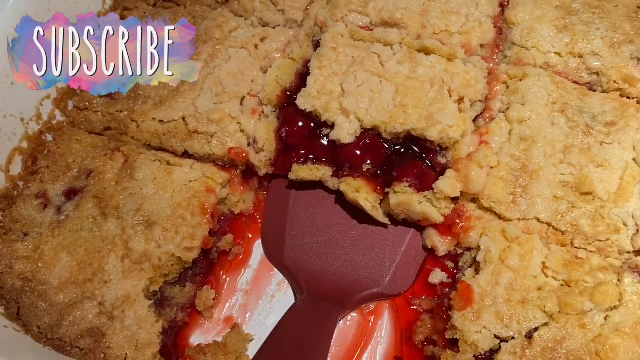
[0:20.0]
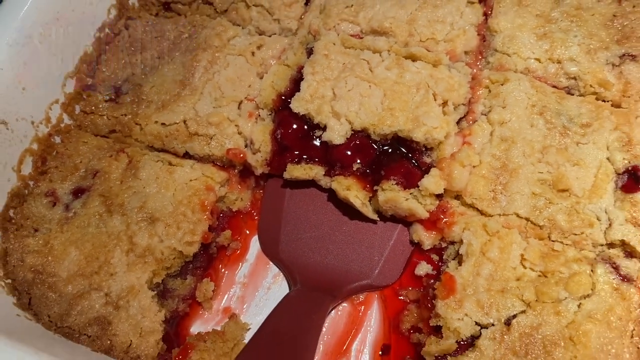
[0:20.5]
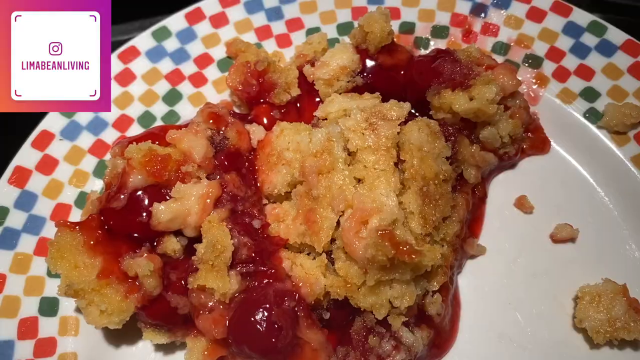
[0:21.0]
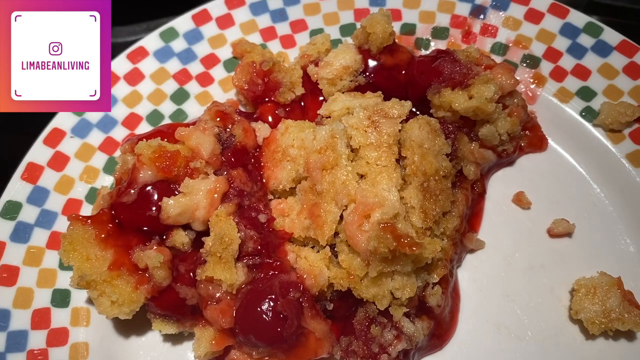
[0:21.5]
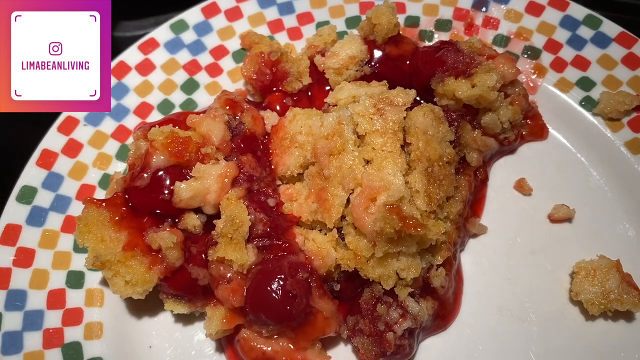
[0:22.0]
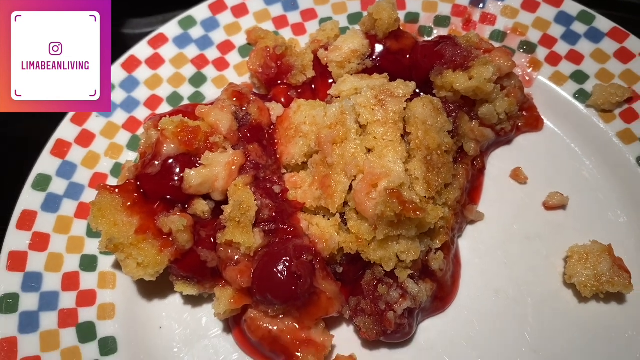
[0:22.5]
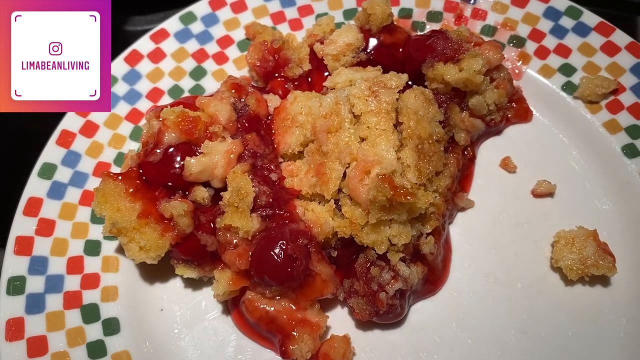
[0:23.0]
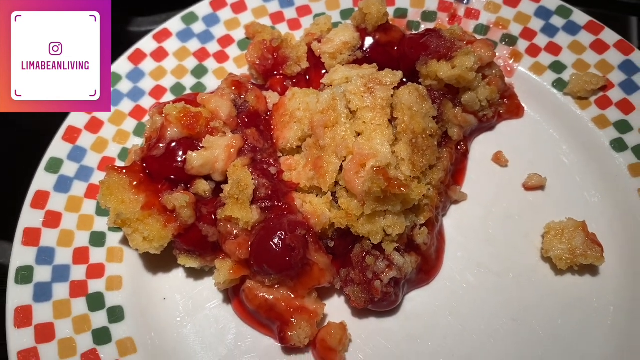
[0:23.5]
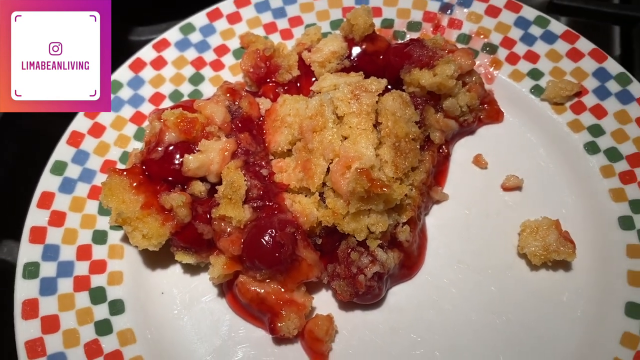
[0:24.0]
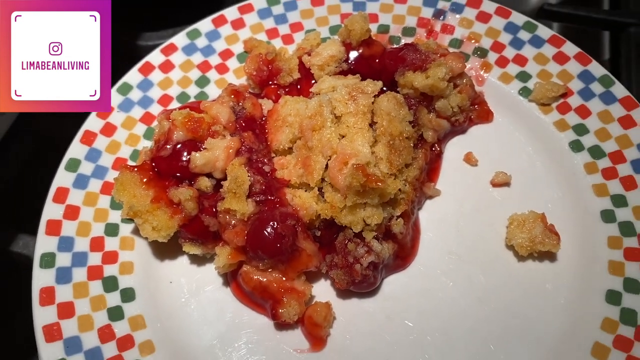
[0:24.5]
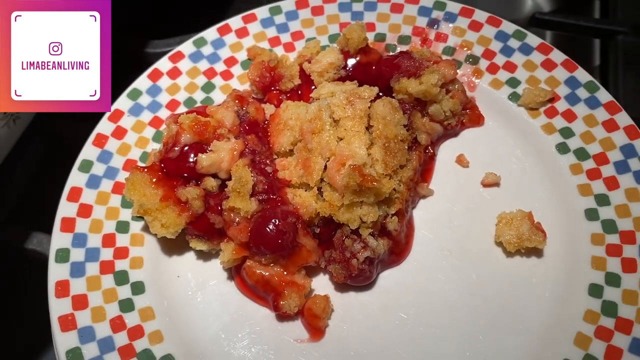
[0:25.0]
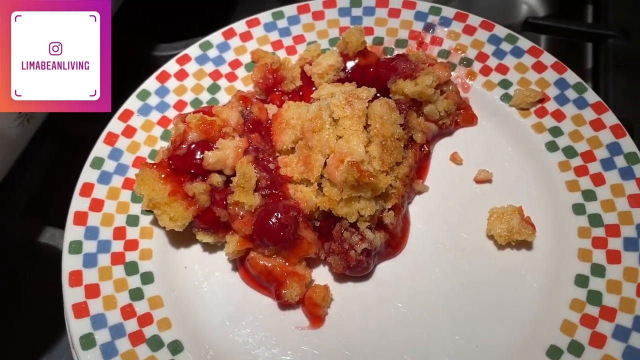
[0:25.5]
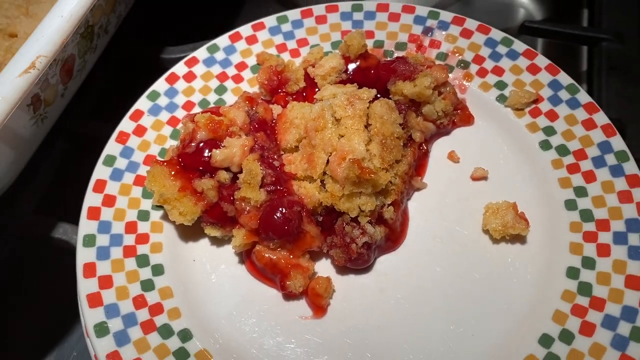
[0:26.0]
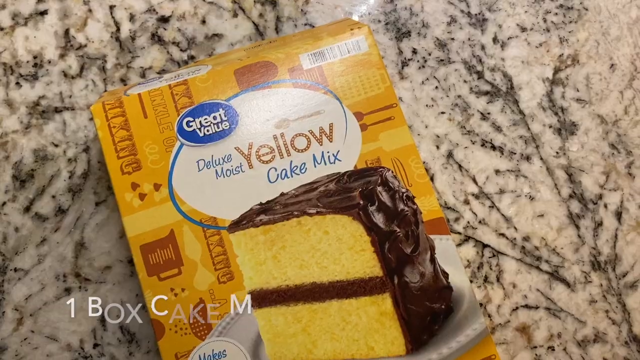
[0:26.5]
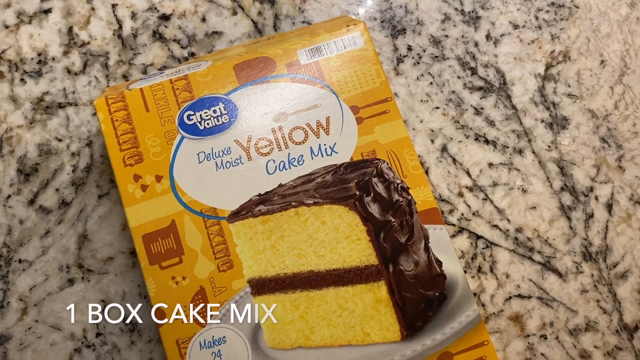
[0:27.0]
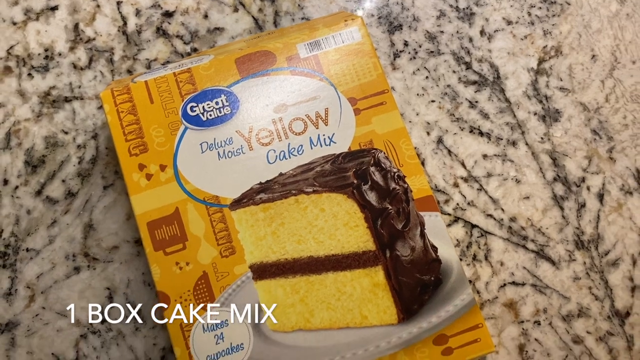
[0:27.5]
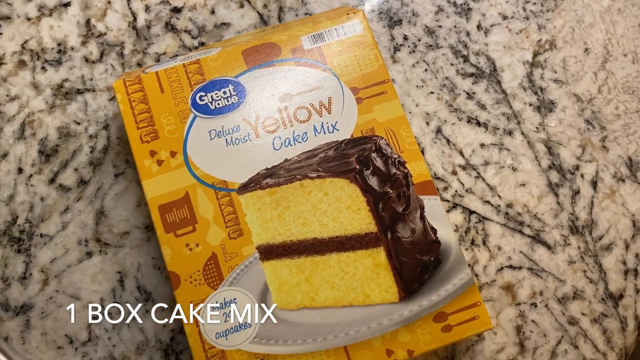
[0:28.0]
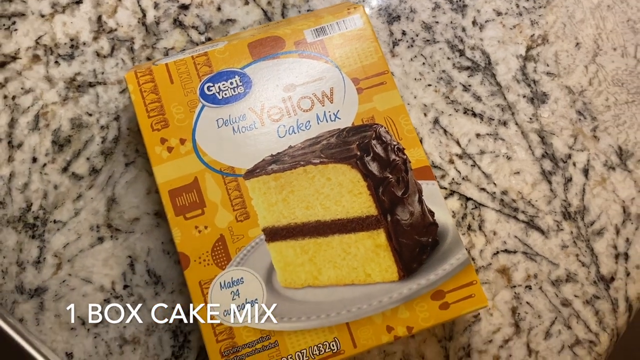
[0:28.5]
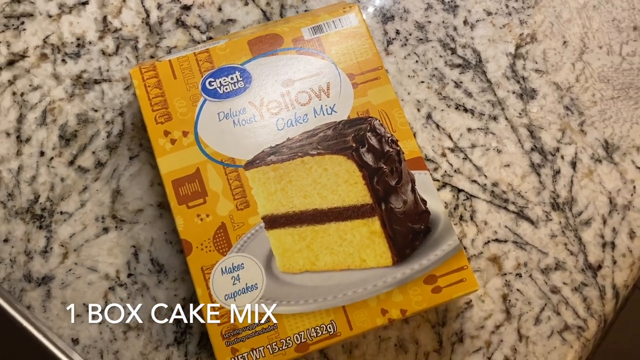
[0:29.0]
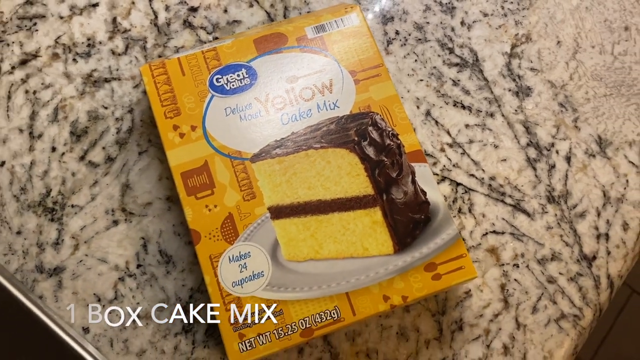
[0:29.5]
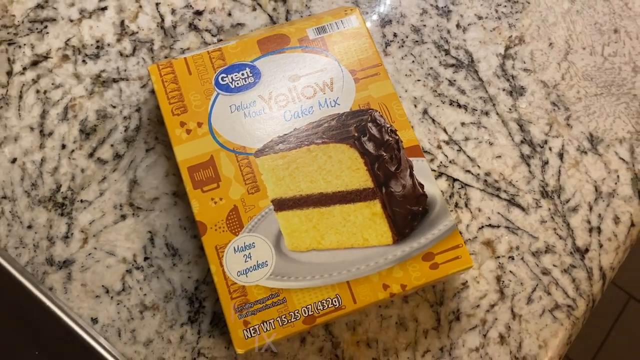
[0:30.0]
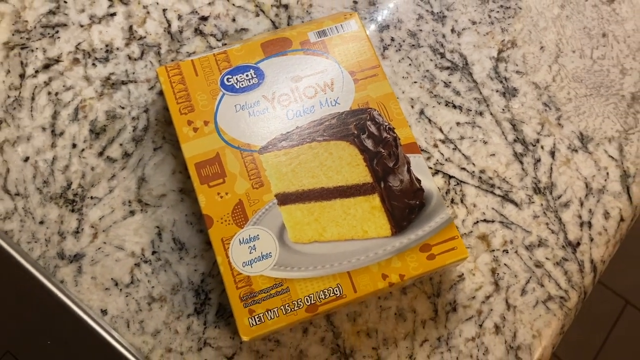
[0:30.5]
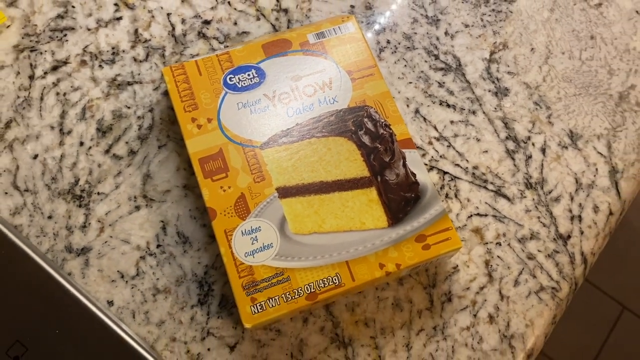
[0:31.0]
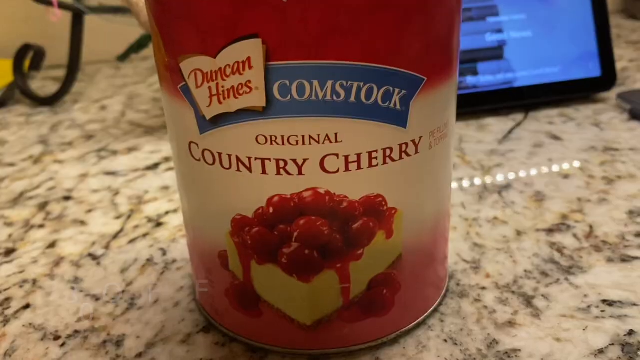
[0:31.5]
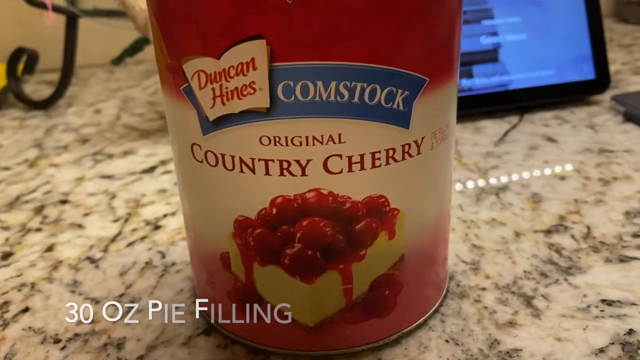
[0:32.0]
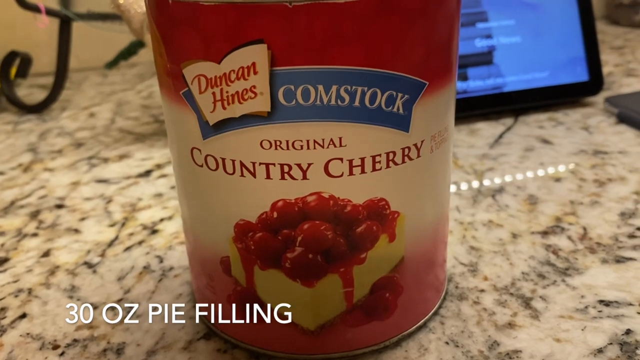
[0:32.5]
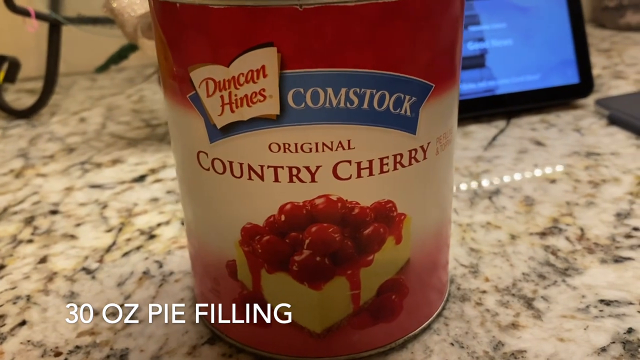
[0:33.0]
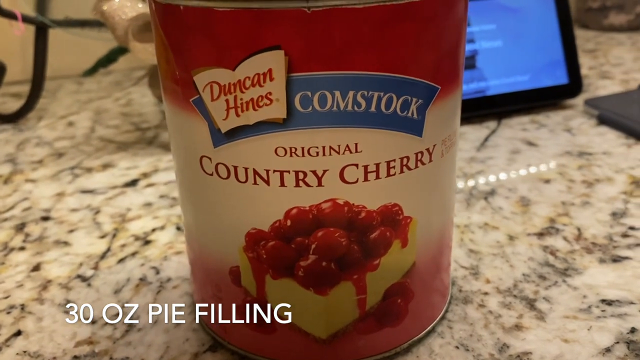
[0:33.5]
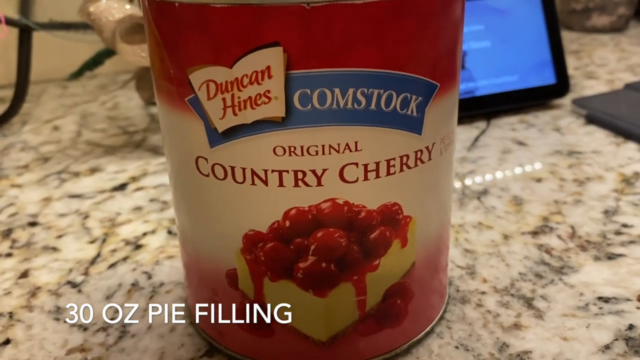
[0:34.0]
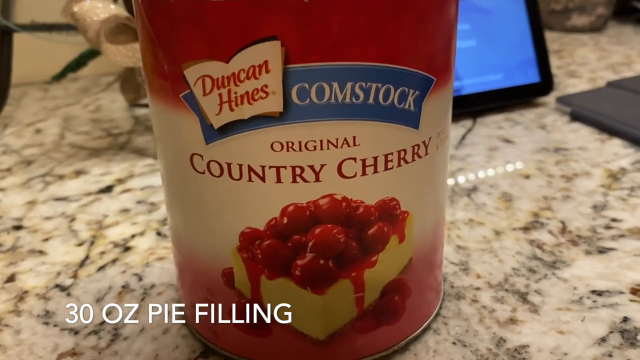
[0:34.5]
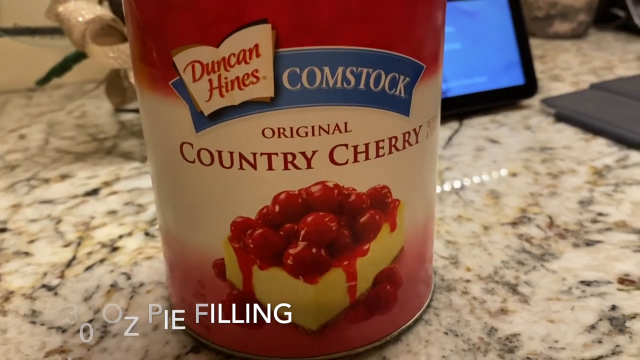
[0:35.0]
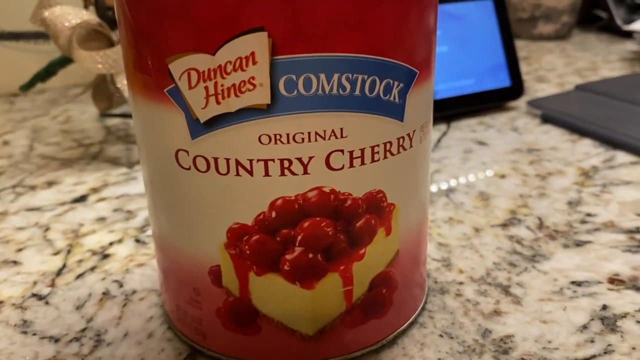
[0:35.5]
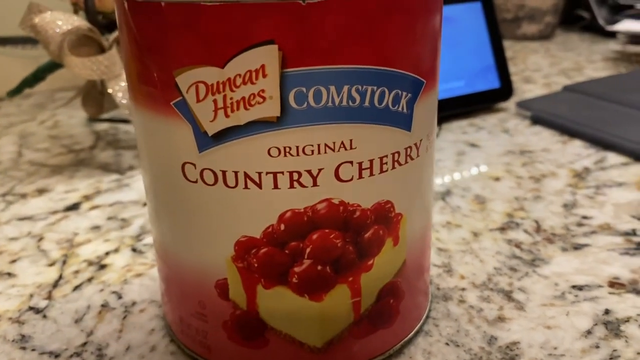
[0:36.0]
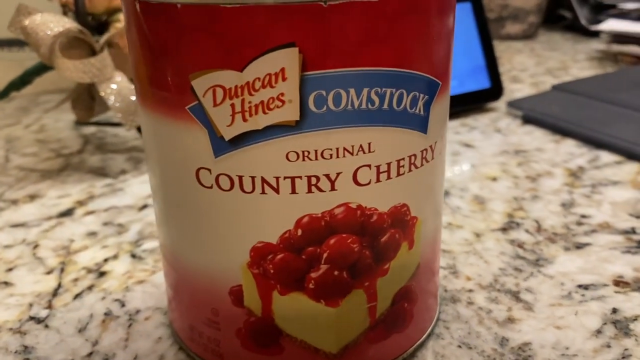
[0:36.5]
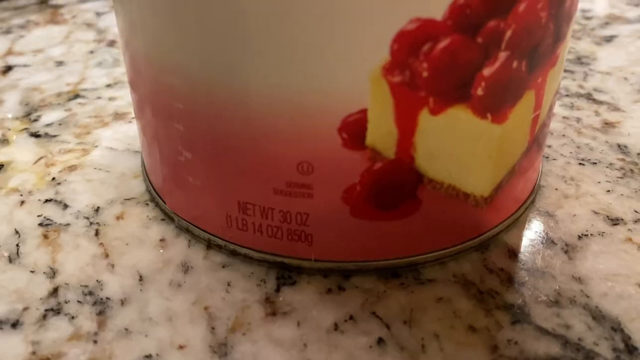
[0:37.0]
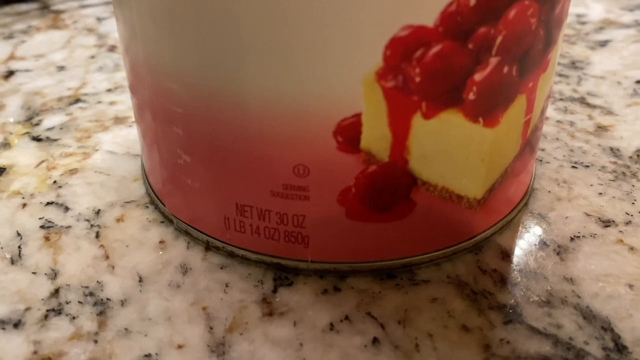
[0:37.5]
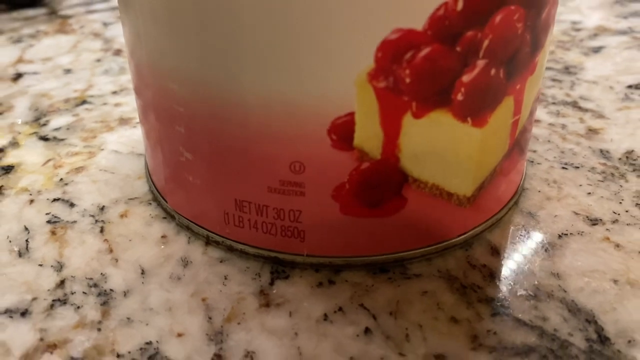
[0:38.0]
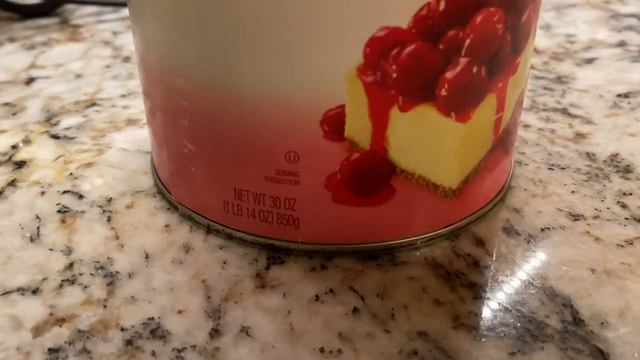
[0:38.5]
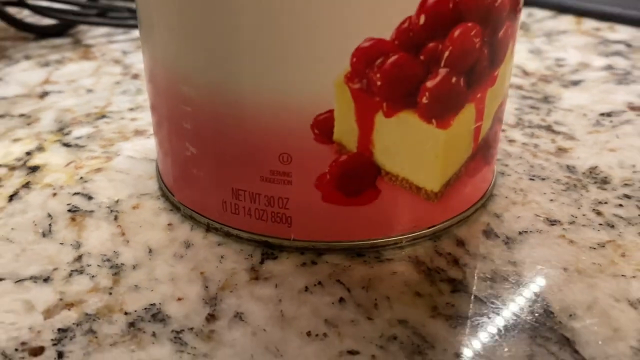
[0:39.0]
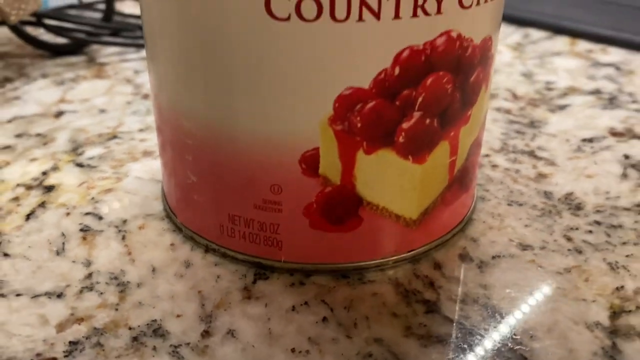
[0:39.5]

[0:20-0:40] A freshly baked pastry has a crumbly-looking, light golden crust. It has been cut into square segments, and a deep red spatula is about to scoop up one of the segments in the middle. Next, the pastry is on a flat, round white ceramic plate with colorful decorative little squares around the edges. The pastry has a rich red filling that looks like cherry filling, with liquid oozing from underneath the crumbly crust. The camera pans backwards. Then the top of a tub of Duncan Hines original country cherry appears, with "30 ounce pie filling" written below it on the left side of the screen. The camera focuses on the top of the tub for a while and then on the bottom of it, where the weight "30 ounce" is written.